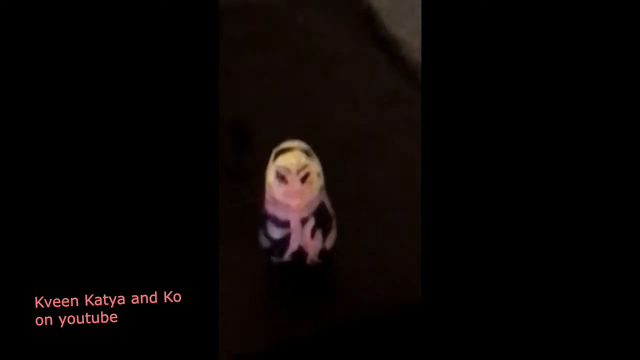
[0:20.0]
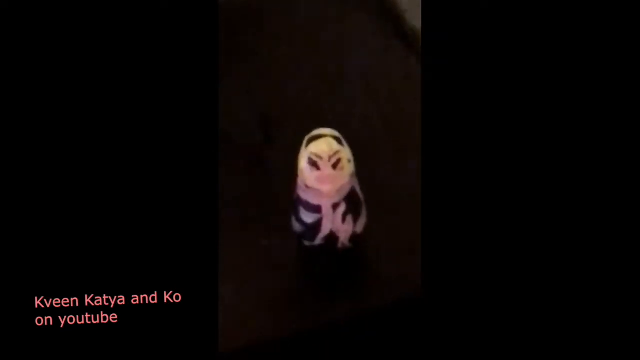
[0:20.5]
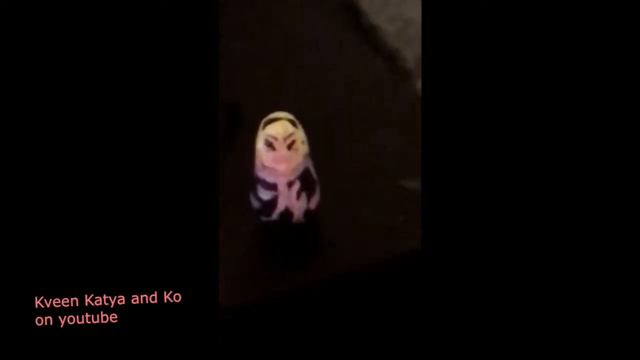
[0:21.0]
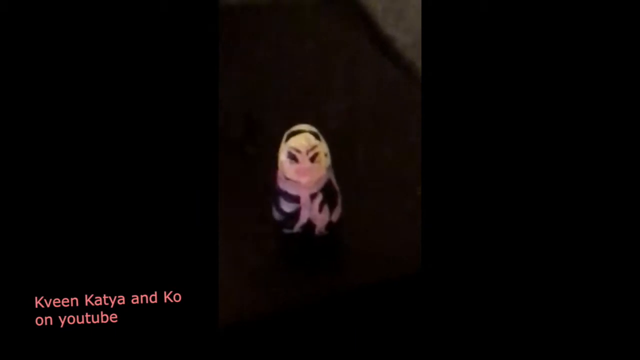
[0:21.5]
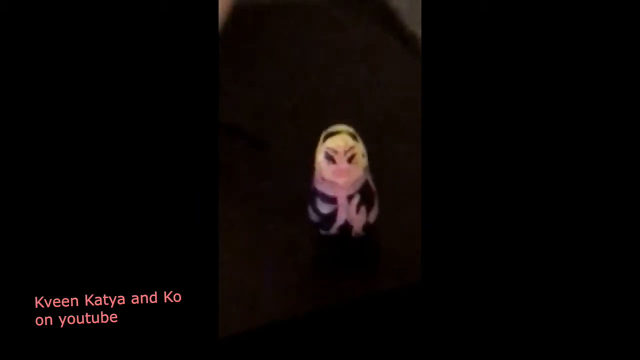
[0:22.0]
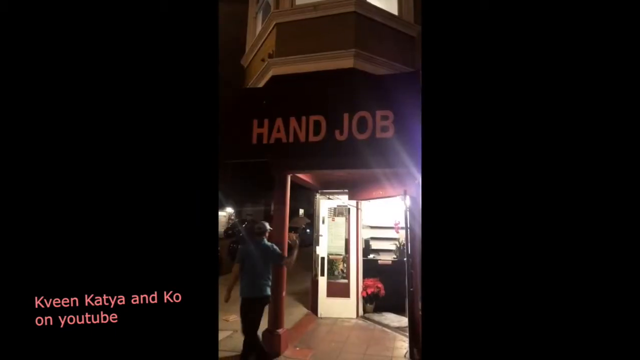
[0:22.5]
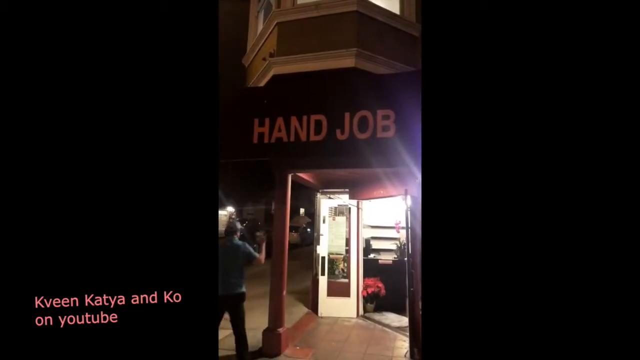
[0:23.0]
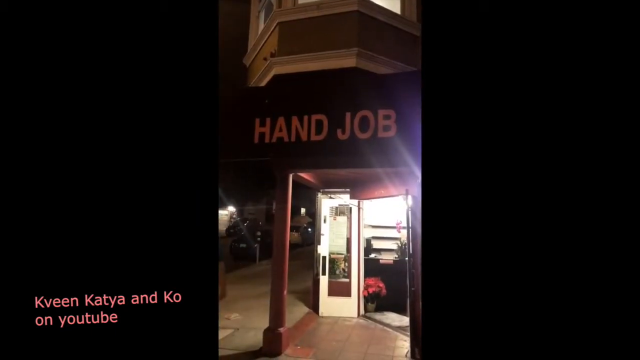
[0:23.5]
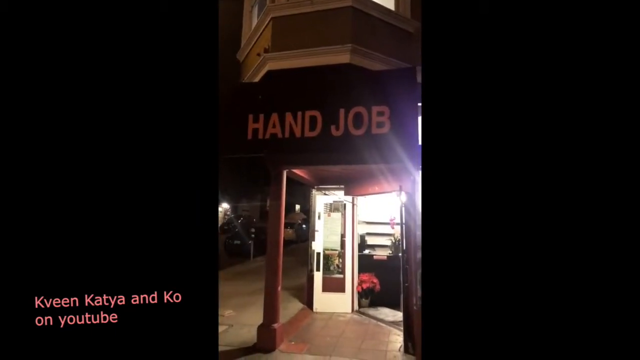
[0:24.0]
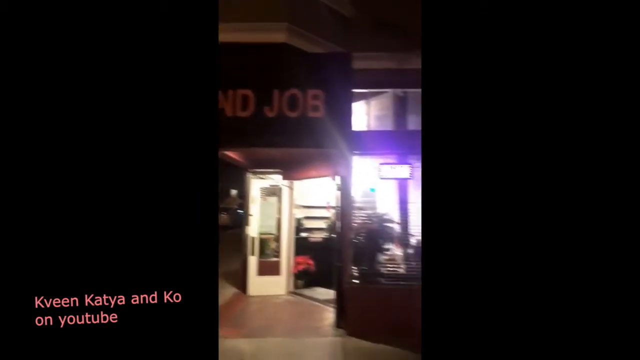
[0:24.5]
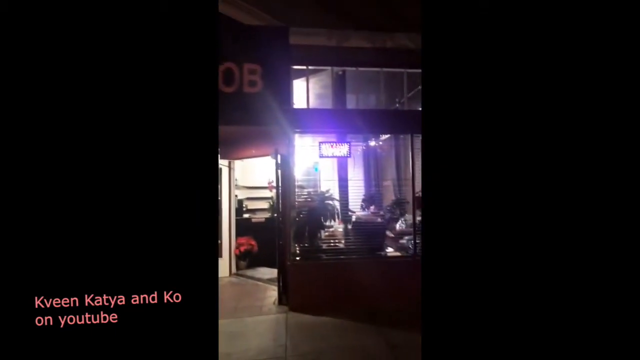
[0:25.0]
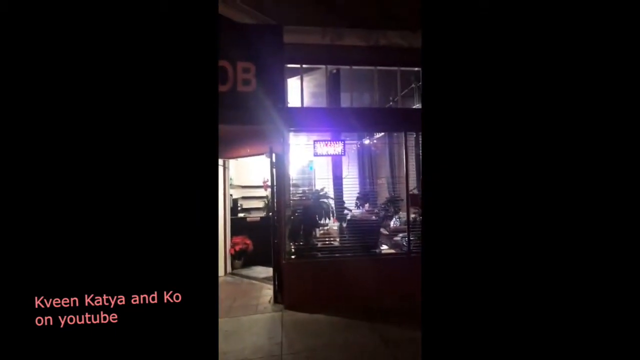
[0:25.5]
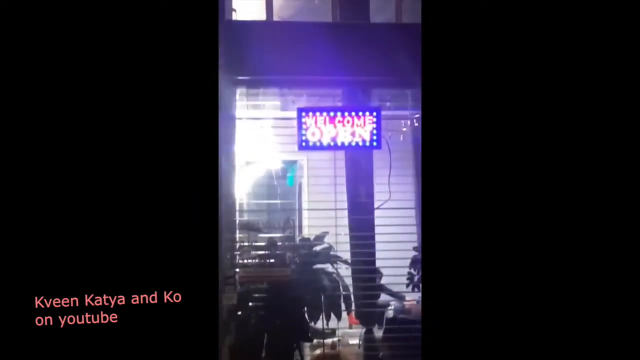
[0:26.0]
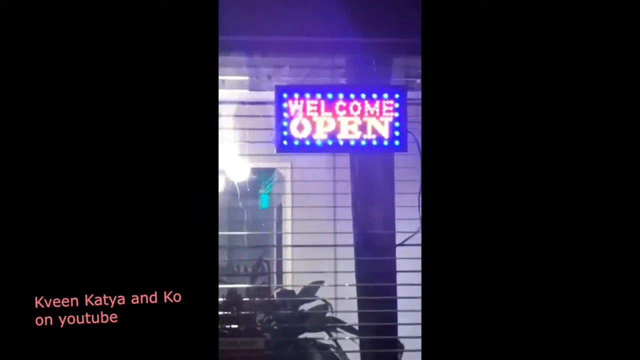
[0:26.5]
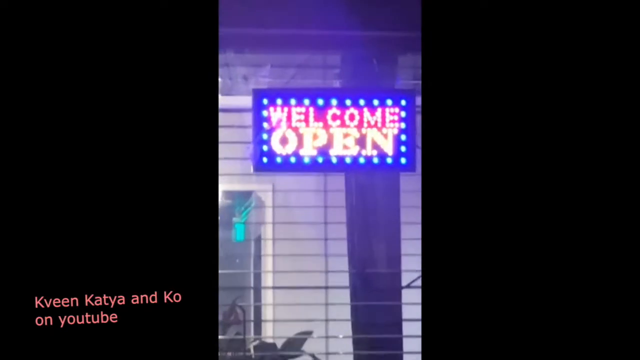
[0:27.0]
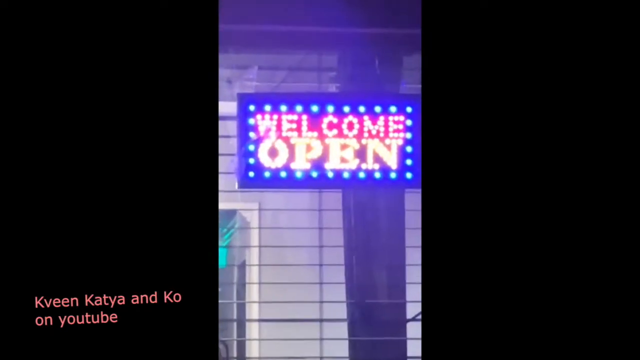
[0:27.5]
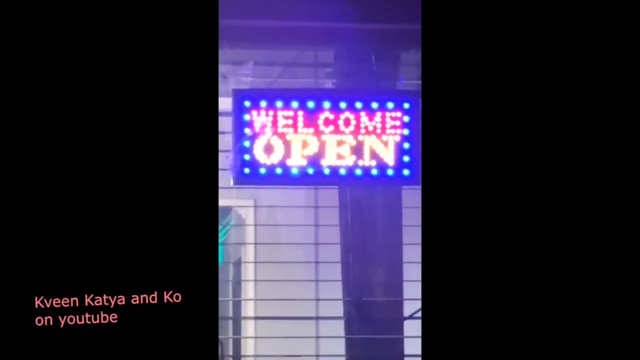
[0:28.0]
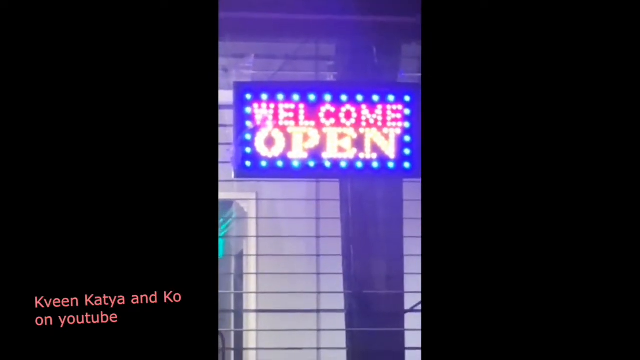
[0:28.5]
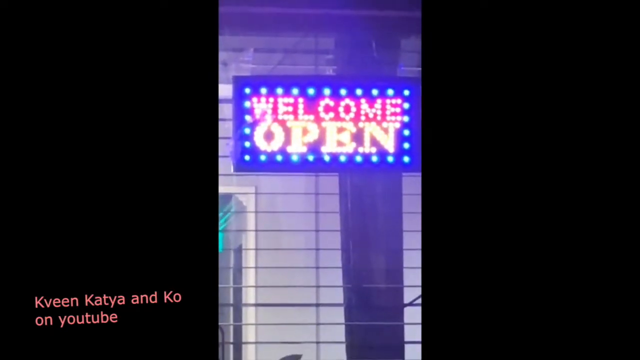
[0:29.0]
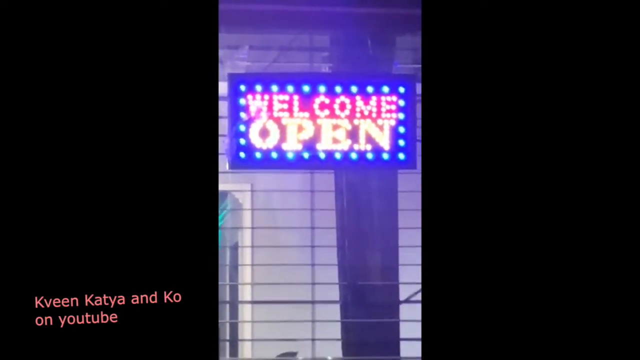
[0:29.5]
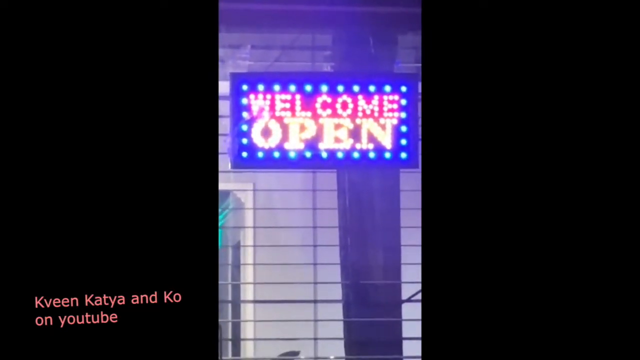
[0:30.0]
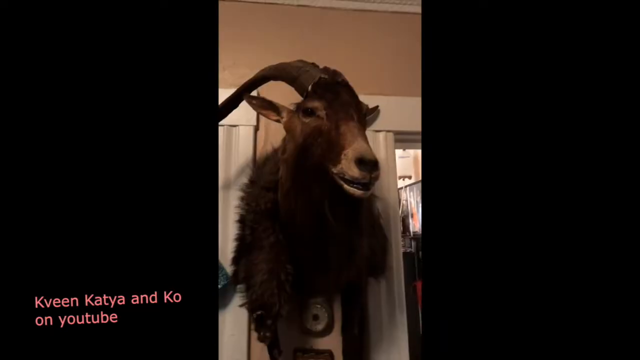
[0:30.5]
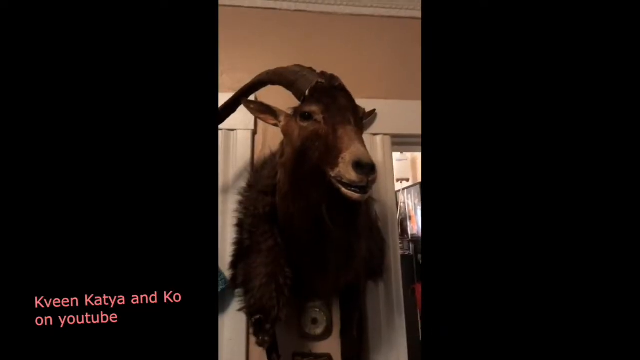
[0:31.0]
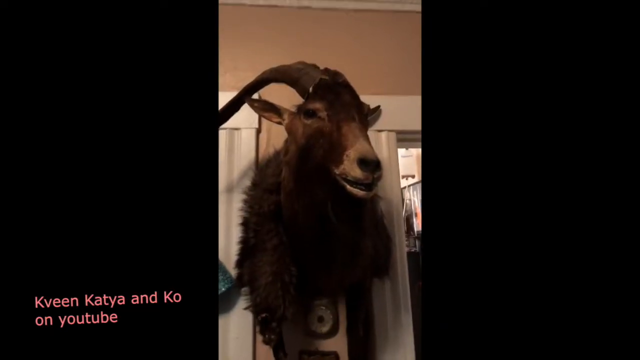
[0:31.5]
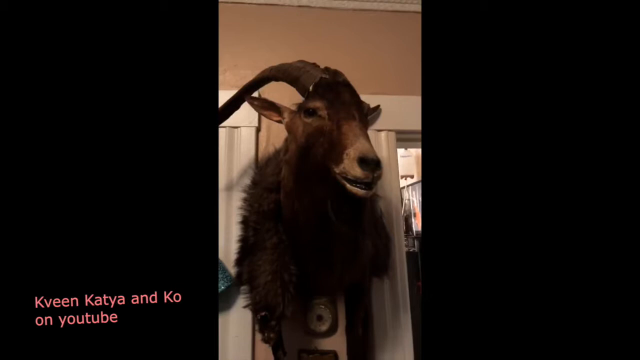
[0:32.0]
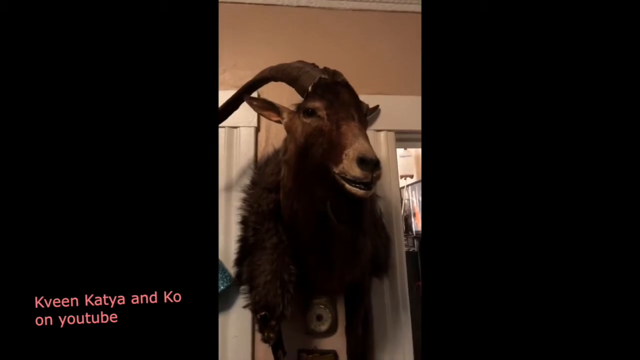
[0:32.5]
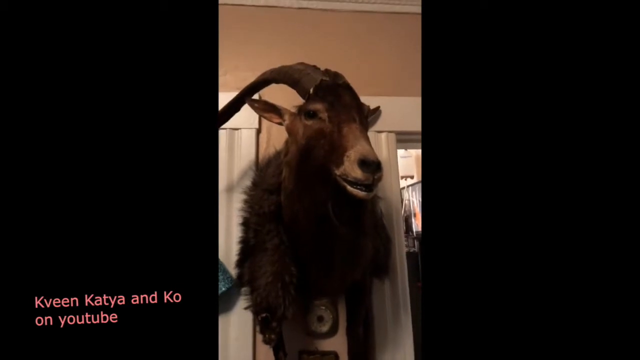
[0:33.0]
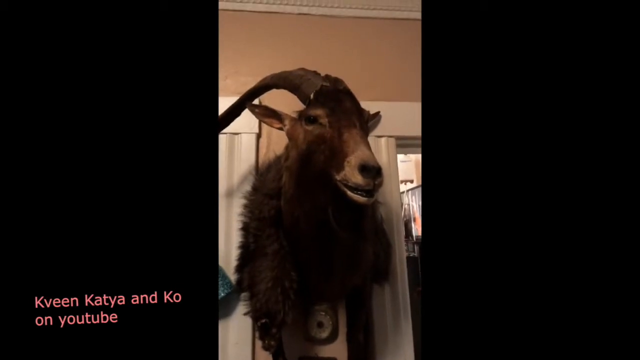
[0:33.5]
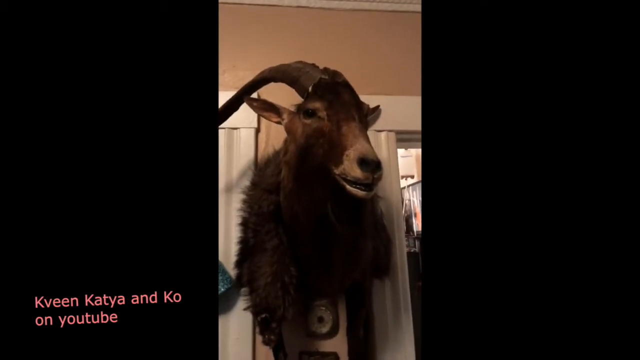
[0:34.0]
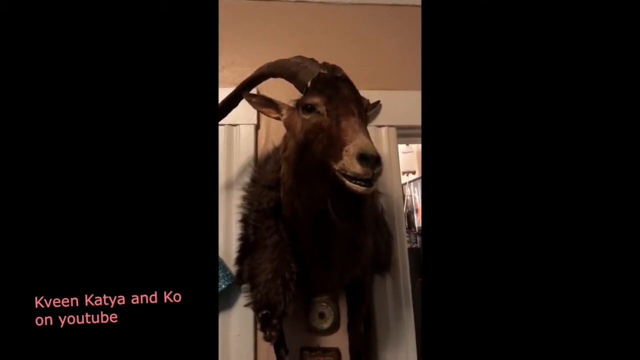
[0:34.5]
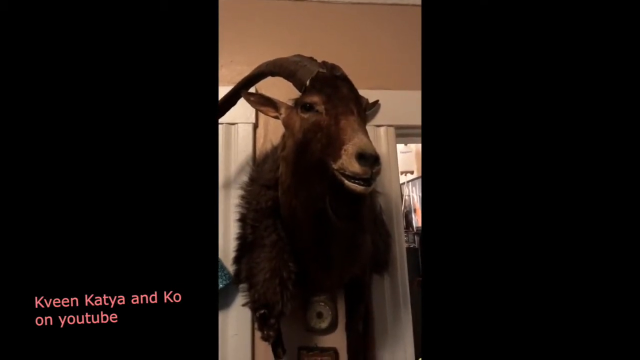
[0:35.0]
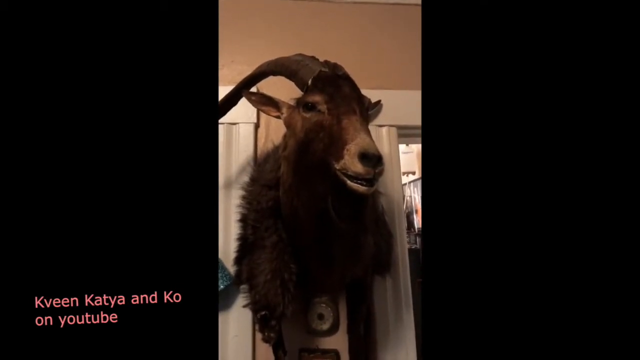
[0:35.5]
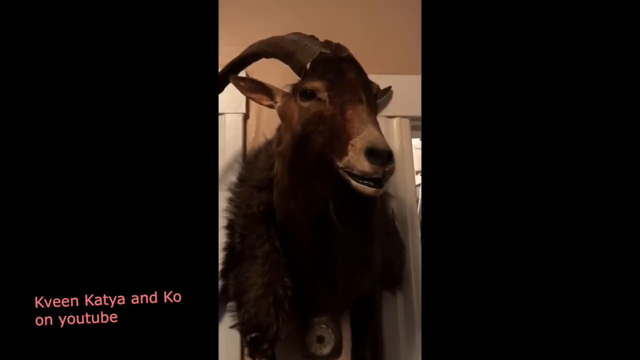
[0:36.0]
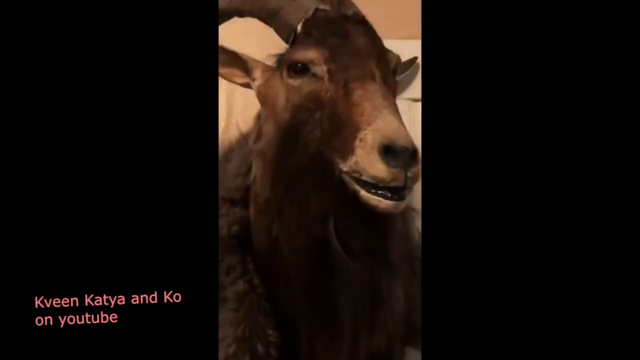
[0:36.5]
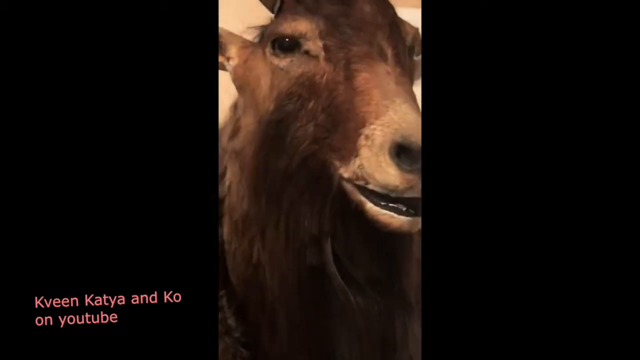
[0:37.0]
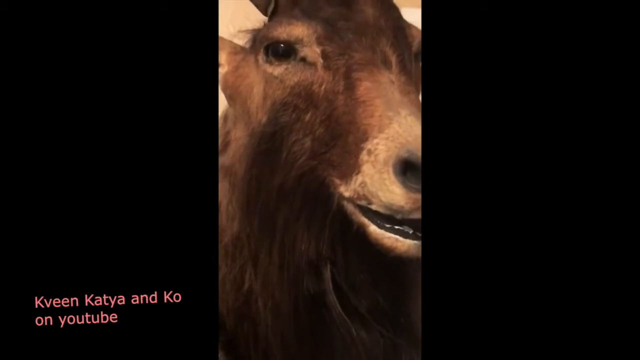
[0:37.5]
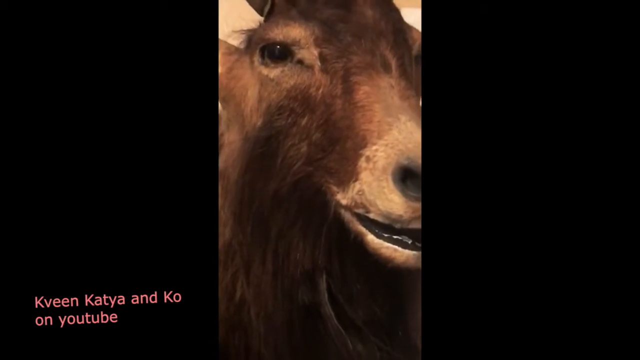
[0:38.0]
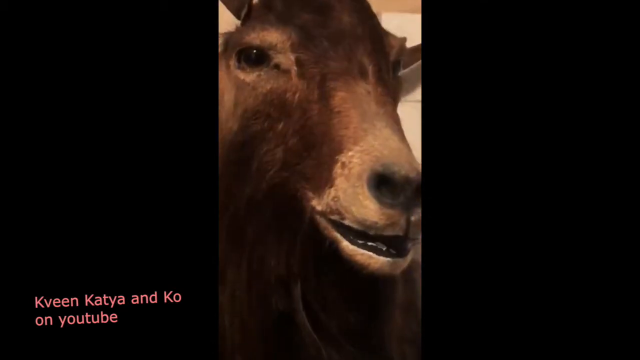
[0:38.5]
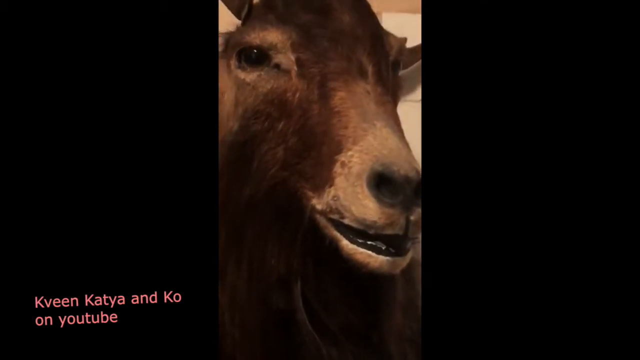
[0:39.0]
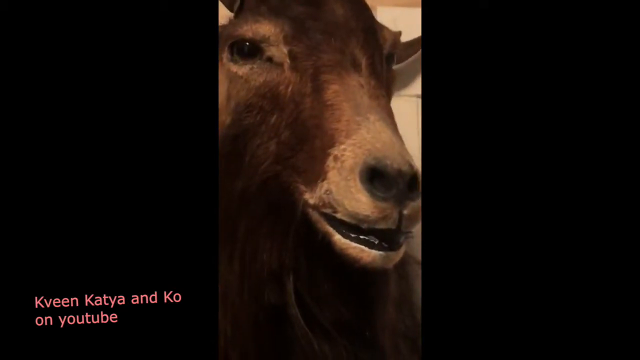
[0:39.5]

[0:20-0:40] A little carved doll, kind of carved out of wood, is in the middle of the screen as someone videos it. Next, a store whose name is "HAND JOB" in all capital letters is filmed. It says "Welcome Open" with blue lights, and the word "welcome" is in red. The camera zooms in on what looks like a stuffed mountain goat, probably taxidermied. A dog is sitting on a burgundy couch that seems kind of circular, and it looks like it is moving in the background. The dog, of an unidentified breed, has short little ears, a little nose that is probably a grayish color, brown eyes, a brown collar and small feet.